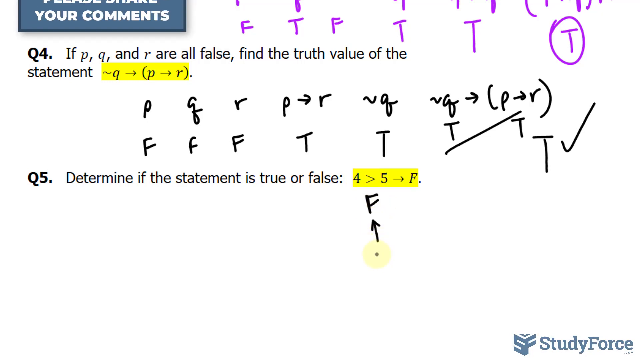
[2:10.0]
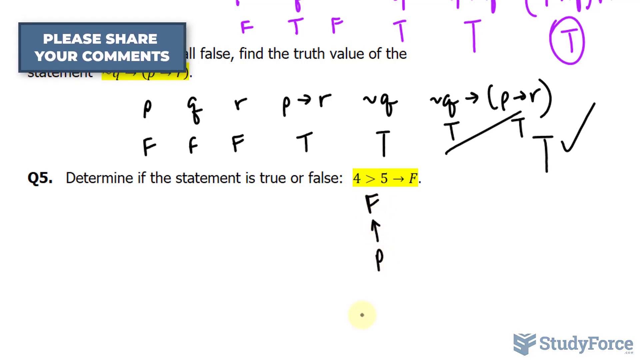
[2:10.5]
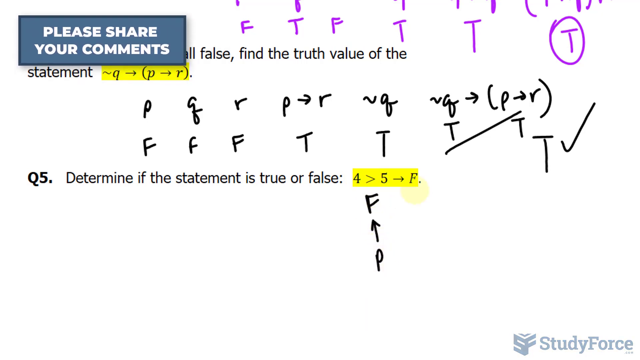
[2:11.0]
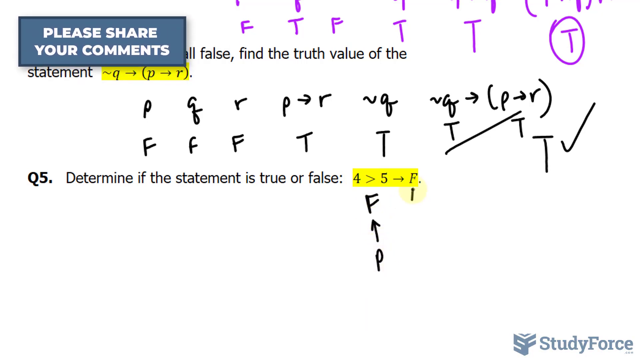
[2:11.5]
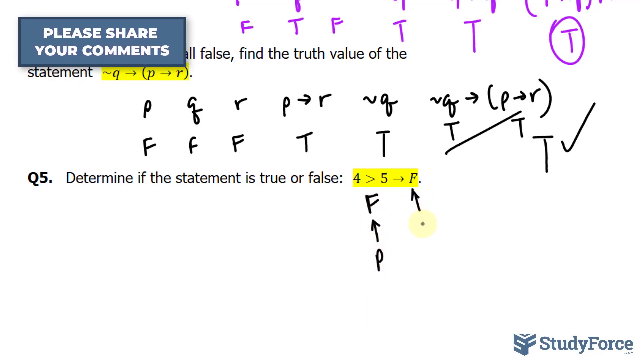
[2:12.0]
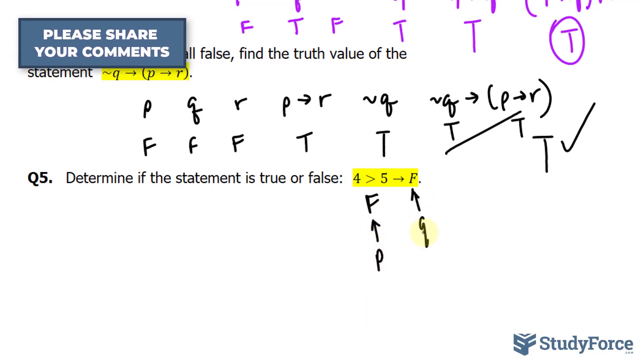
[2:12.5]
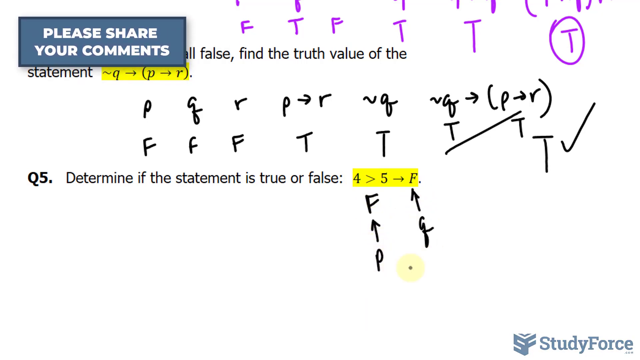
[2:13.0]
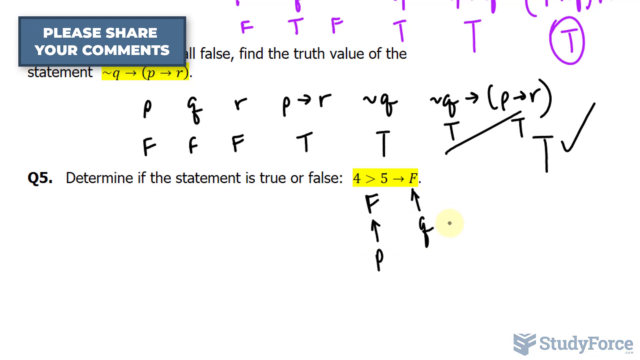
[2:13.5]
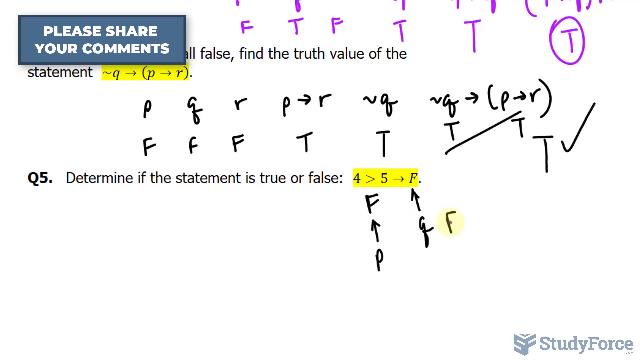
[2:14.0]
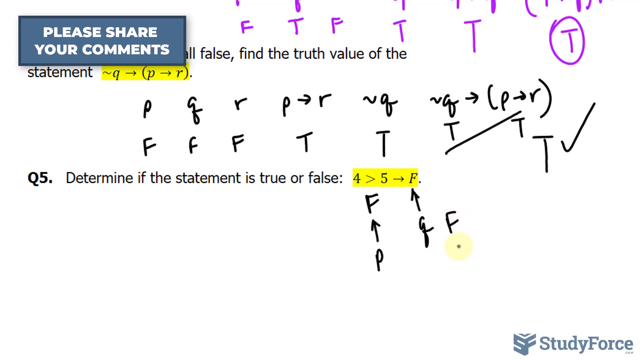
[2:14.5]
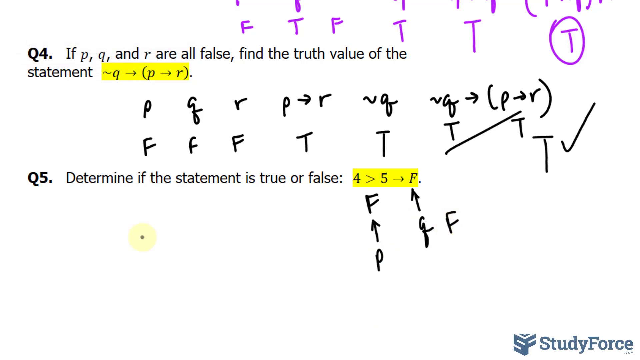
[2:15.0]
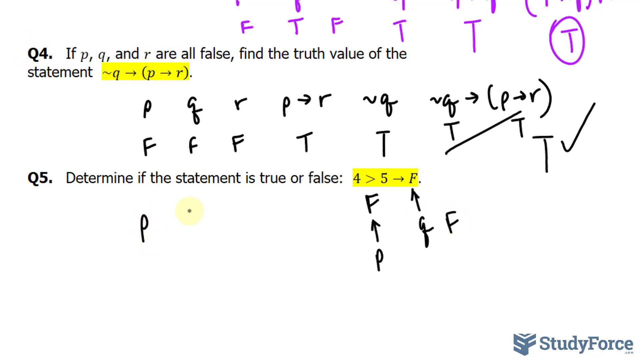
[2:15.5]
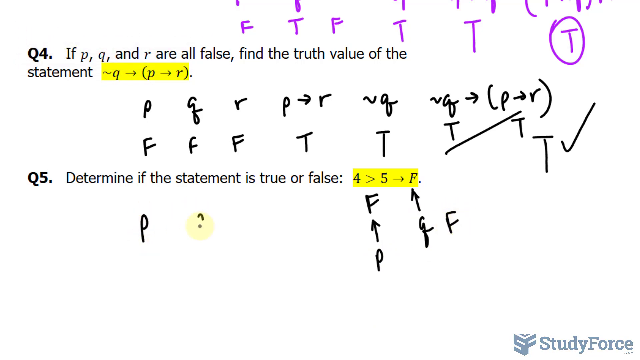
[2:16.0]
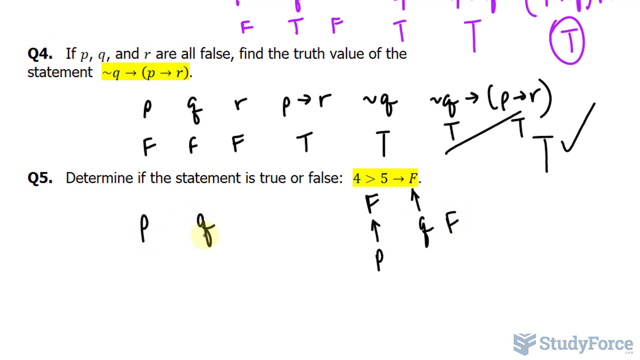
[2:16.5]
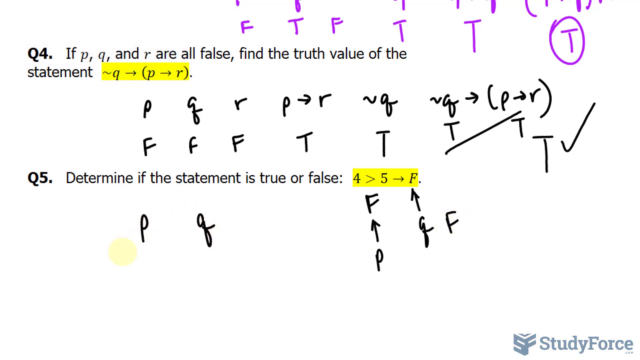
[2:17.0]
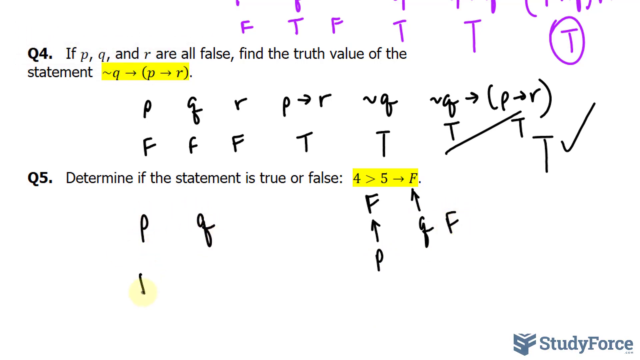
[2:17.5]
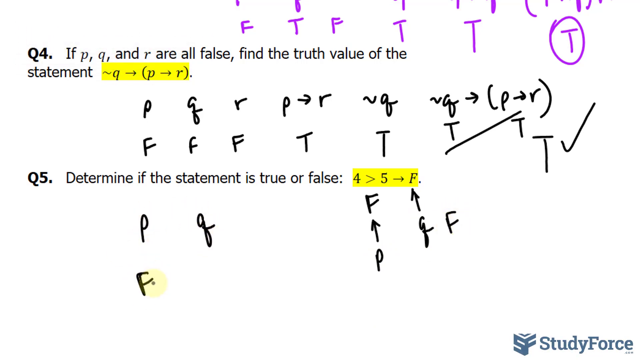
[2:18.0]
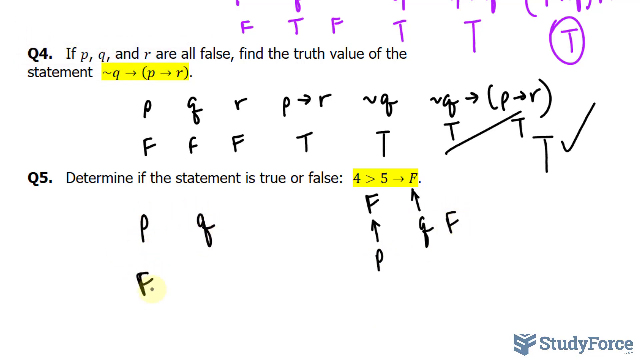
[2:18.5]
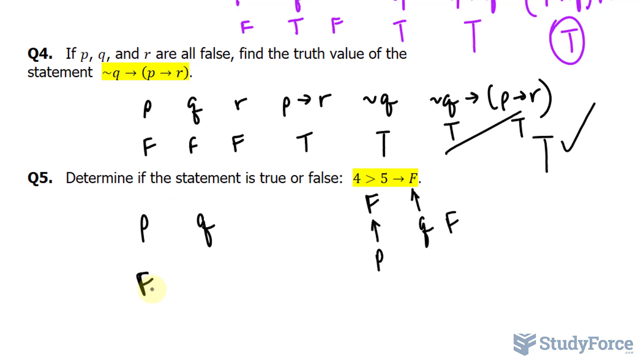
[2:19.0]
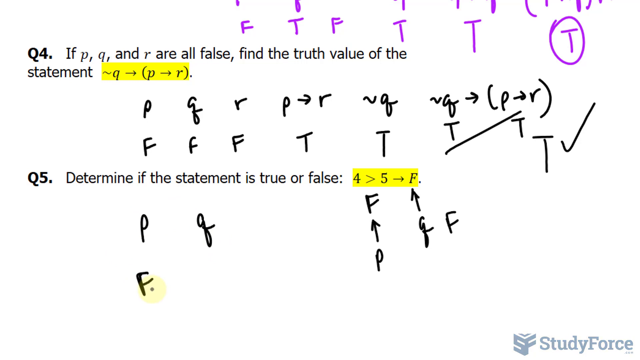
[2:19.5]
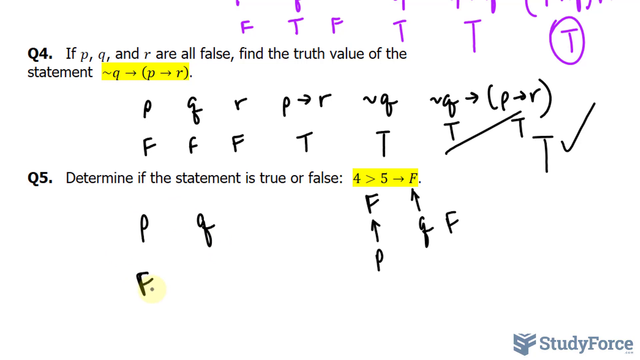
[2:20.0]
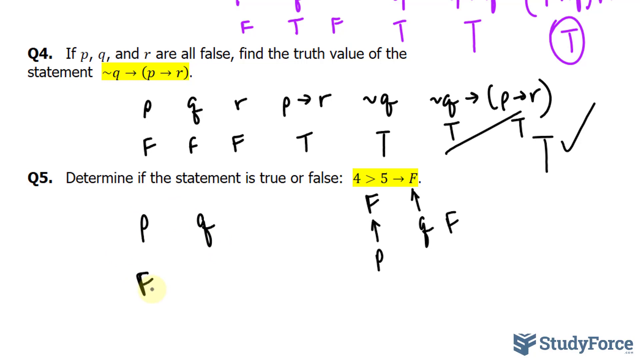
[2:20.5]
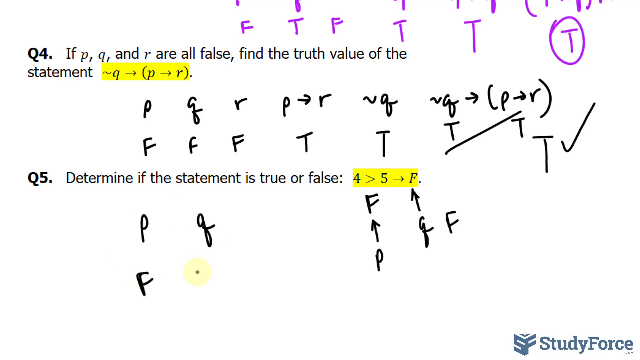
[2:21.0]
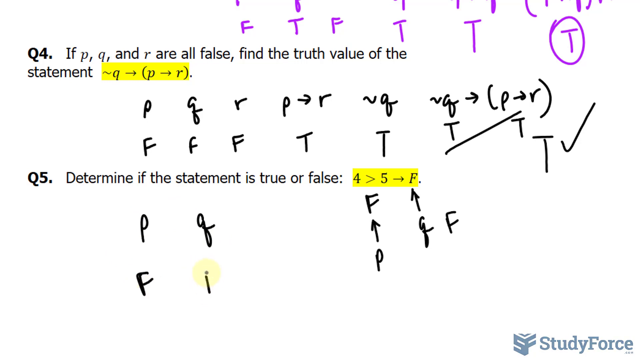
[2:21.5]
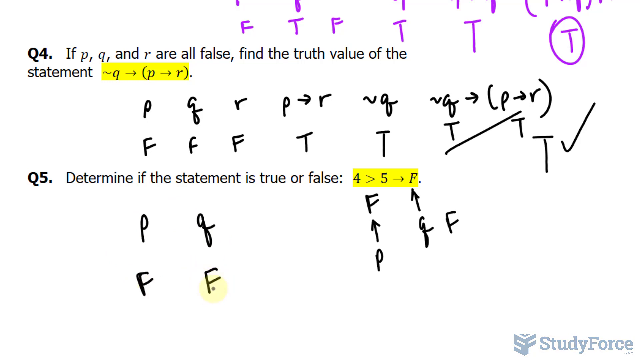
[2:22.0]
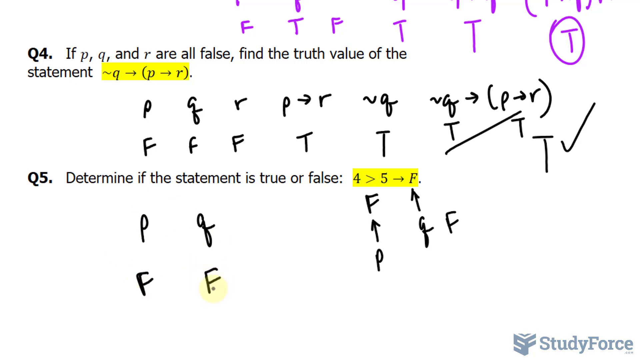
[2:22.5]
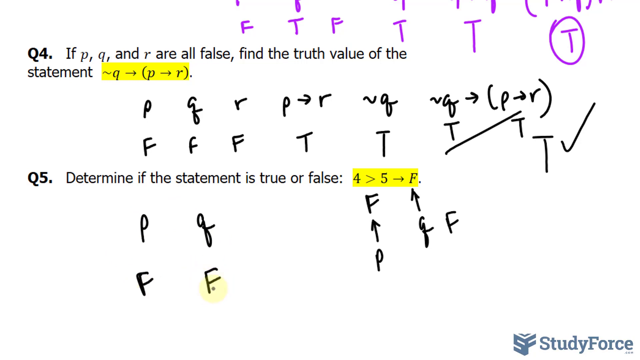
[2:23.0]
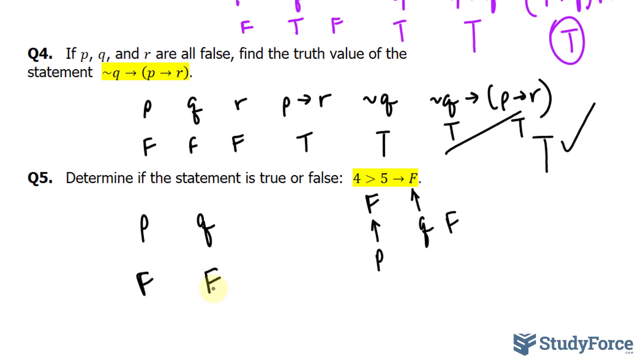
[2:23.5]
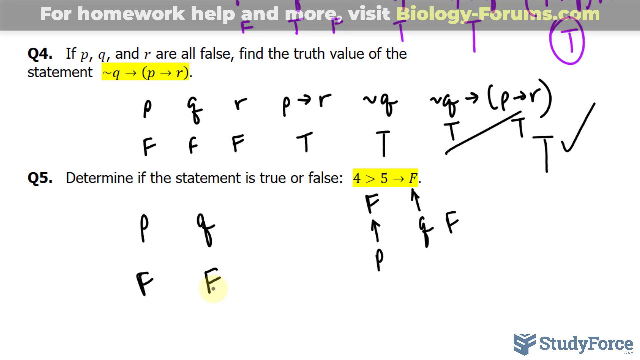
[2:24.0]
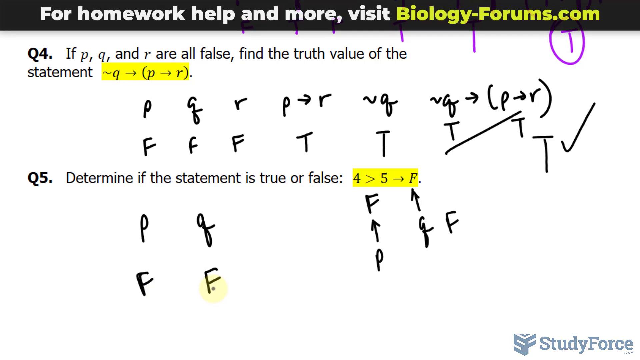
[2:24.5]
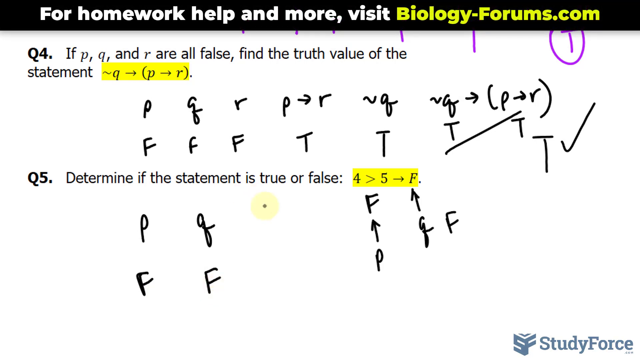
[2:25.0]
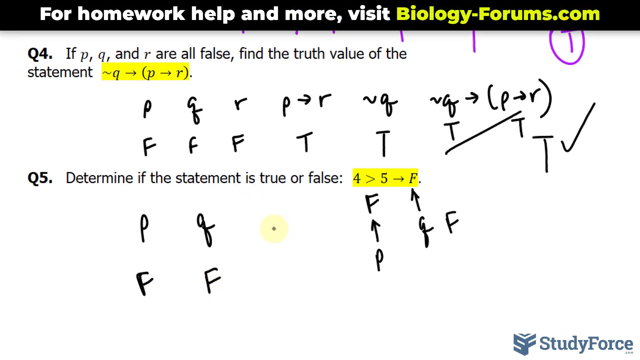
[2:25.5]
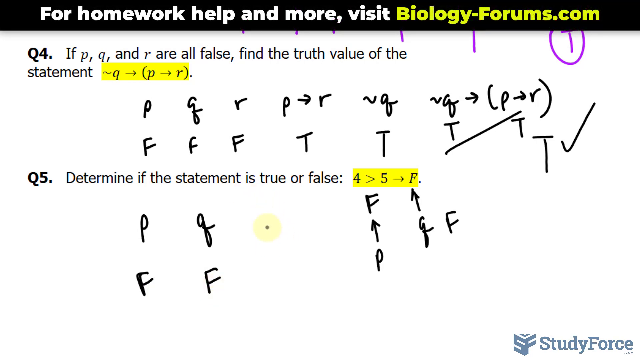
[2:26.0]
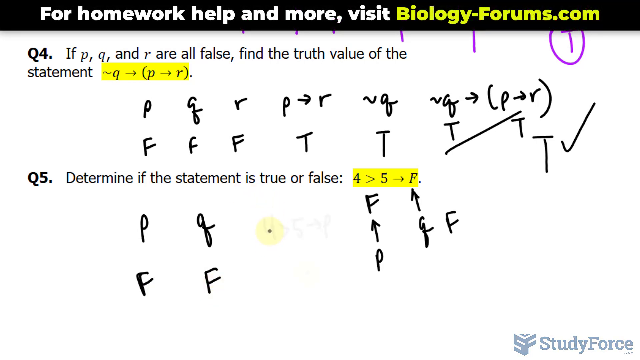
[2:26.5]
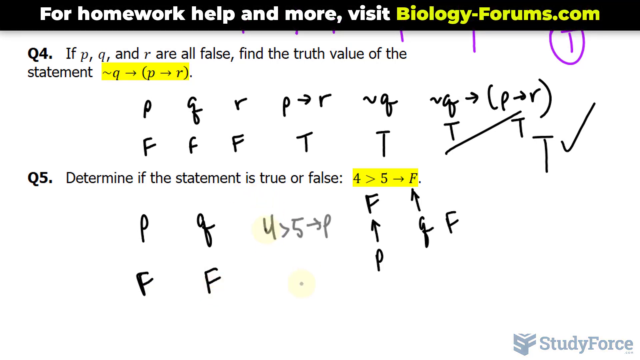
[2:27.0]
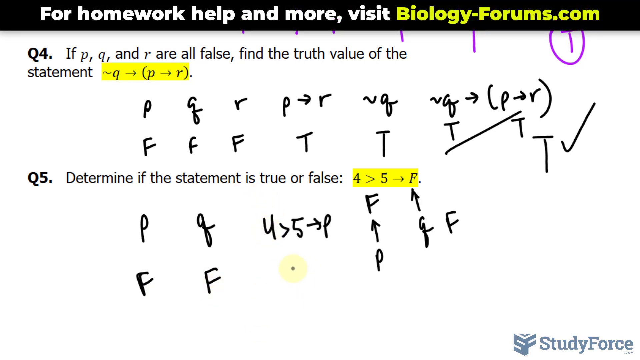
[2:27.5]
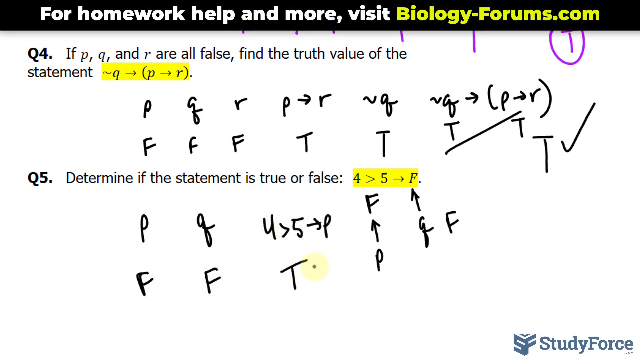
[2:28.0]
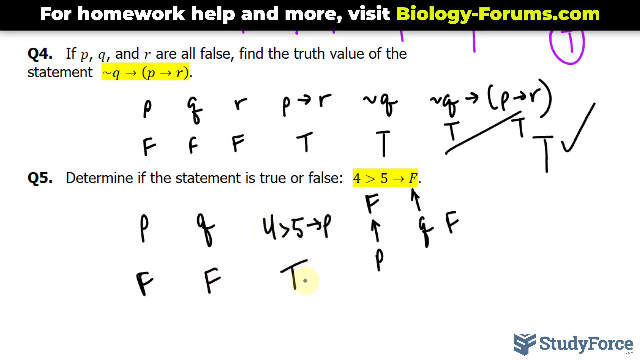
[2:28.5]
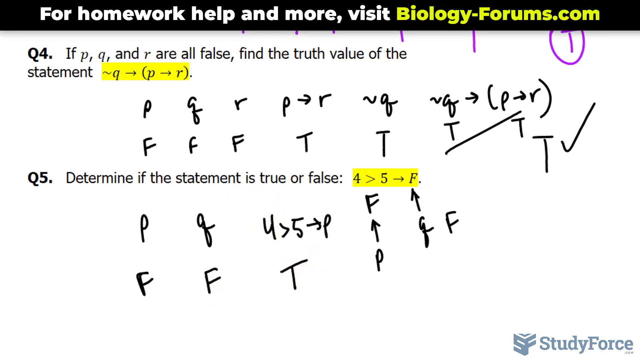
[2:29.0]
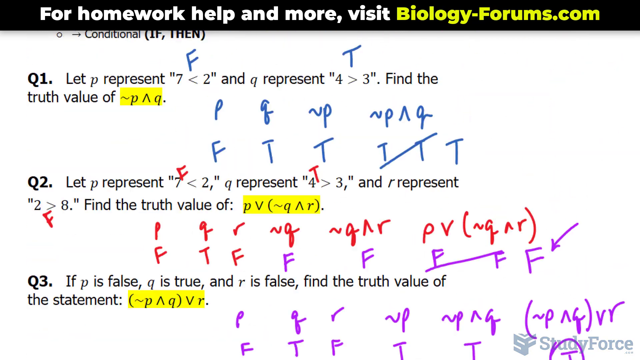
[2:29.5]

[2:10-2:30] A blue rectangular banner with a dark blue border appears in the upper left corner, containing white text that reads "Please share your comments". After a few moments it disappears from the frame, moving upwards. Meanwhile, the cursor writes characters in black ink in the space below Q5. In the upper part of the screen, a banner with a black background appears containing a sentence, some words in white and others in lime green. The cursor moves fluidly throughout, making it easy to follow as it writes and moves across different parts of the page. At the bottom right, visible throughout the video, is the blue StudyForce logo.